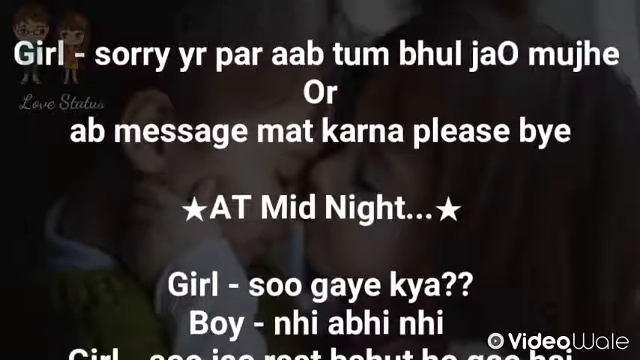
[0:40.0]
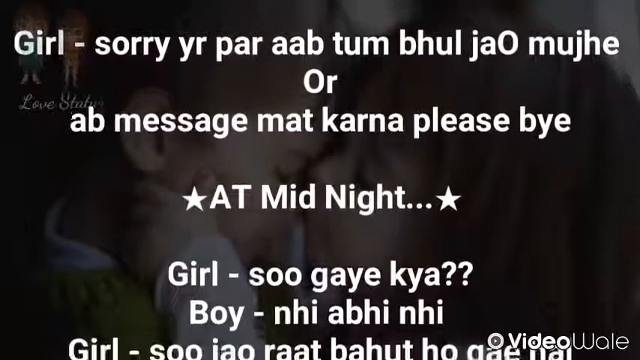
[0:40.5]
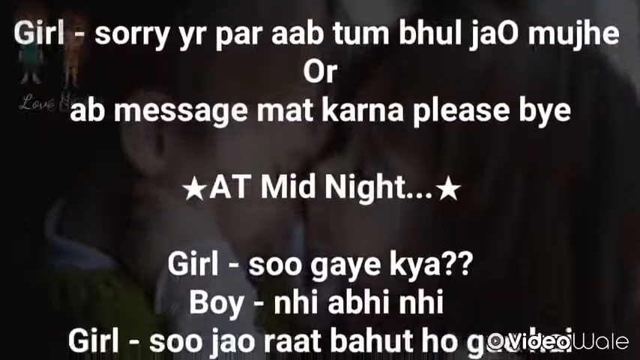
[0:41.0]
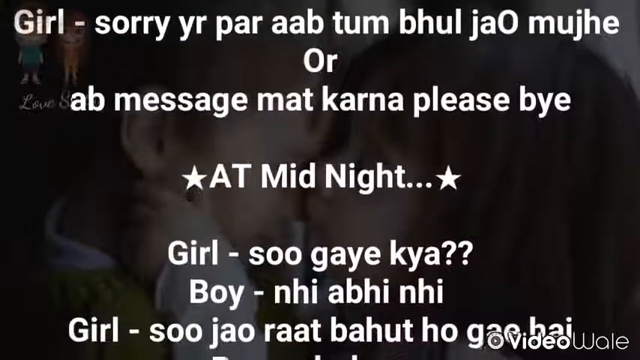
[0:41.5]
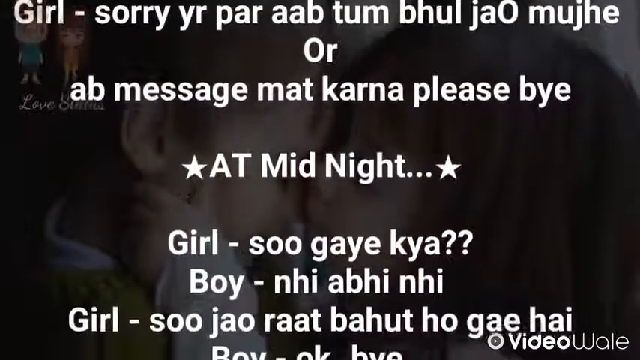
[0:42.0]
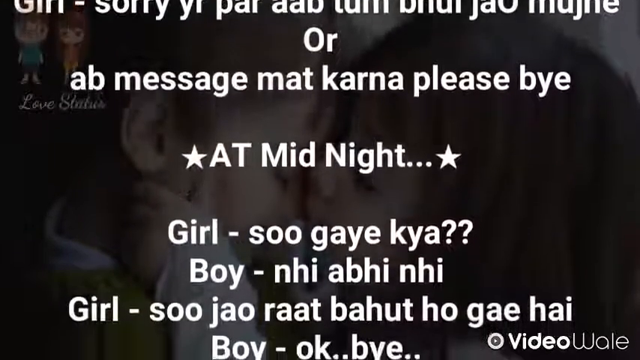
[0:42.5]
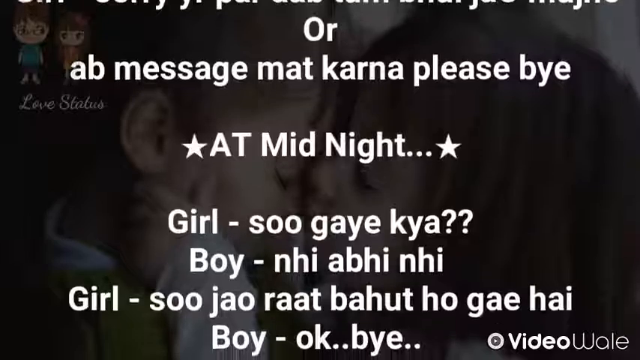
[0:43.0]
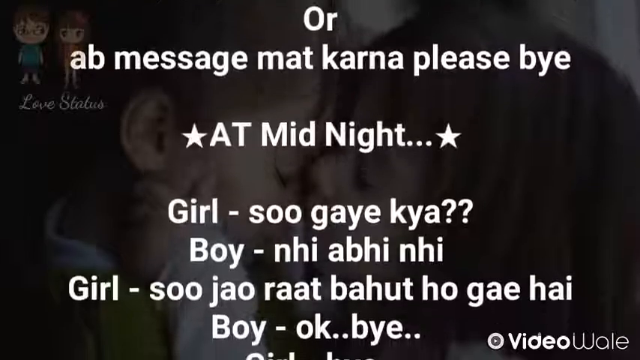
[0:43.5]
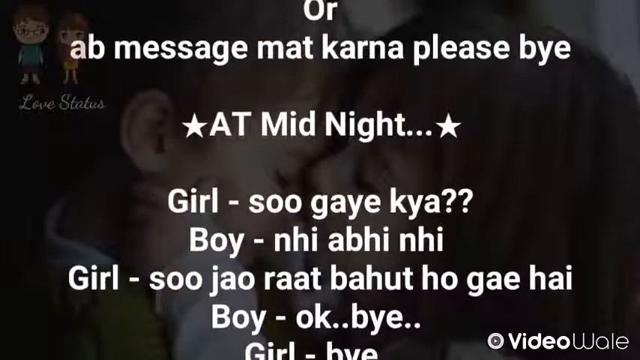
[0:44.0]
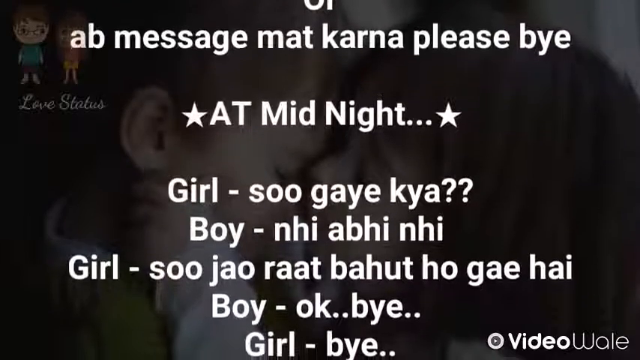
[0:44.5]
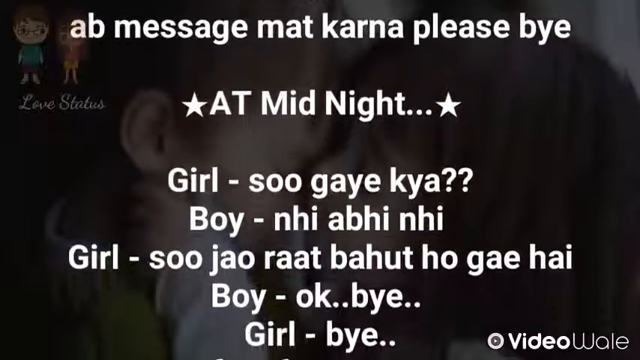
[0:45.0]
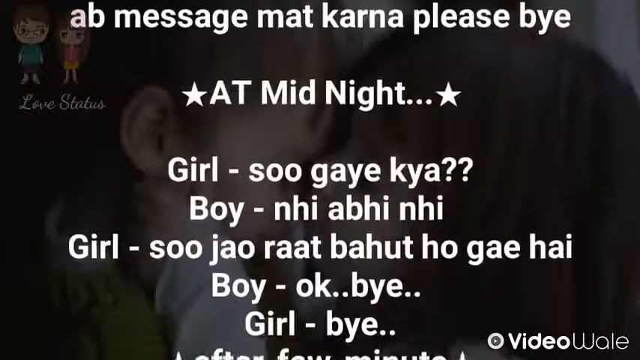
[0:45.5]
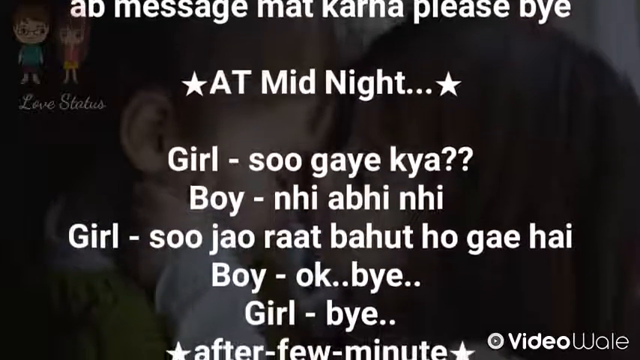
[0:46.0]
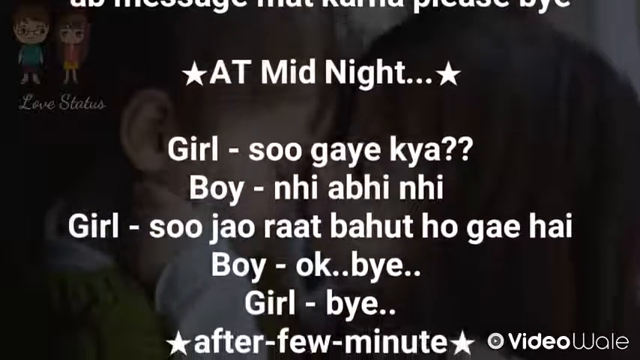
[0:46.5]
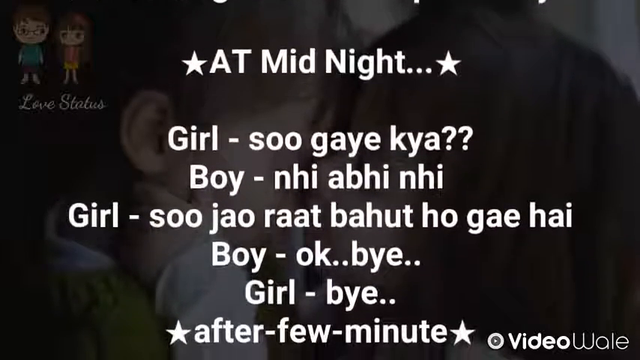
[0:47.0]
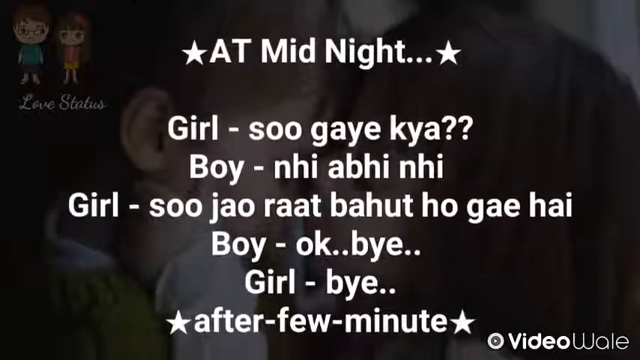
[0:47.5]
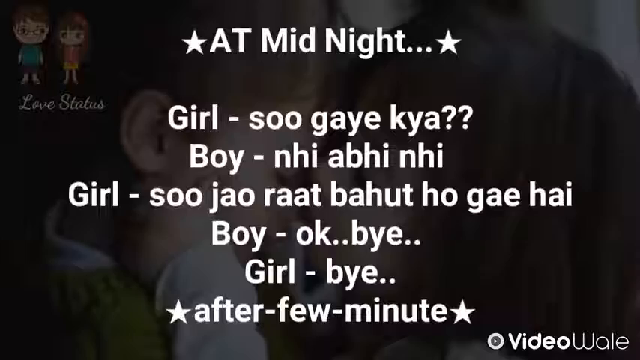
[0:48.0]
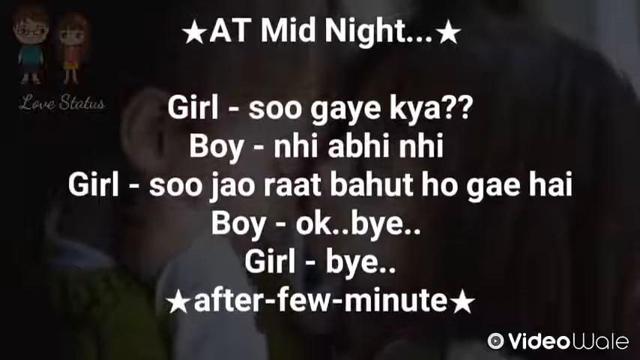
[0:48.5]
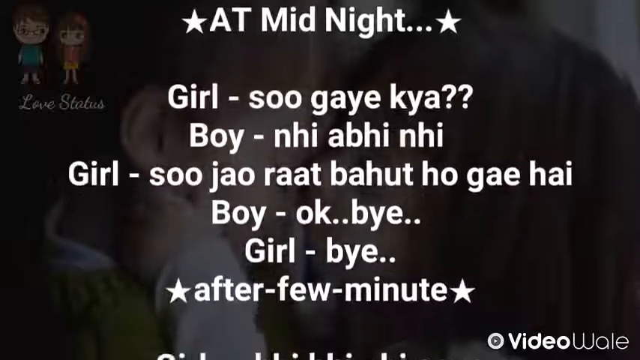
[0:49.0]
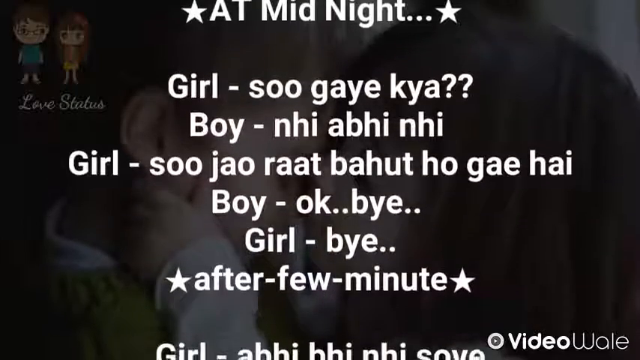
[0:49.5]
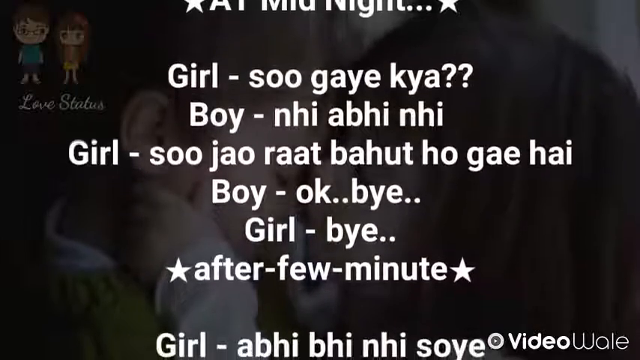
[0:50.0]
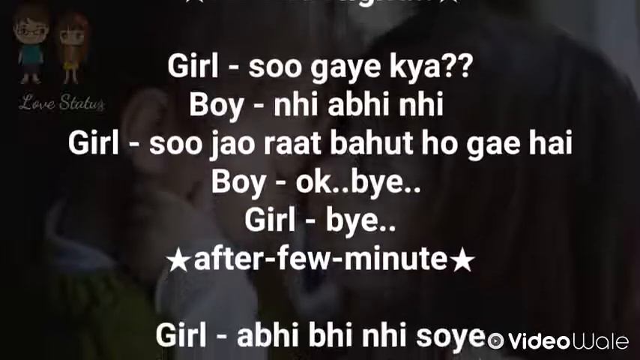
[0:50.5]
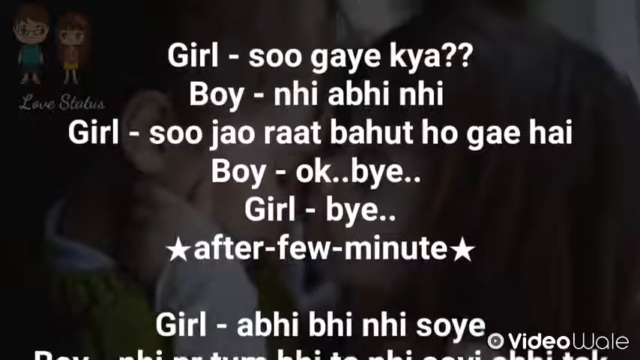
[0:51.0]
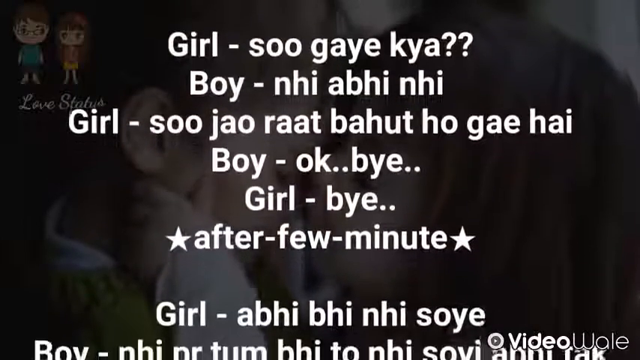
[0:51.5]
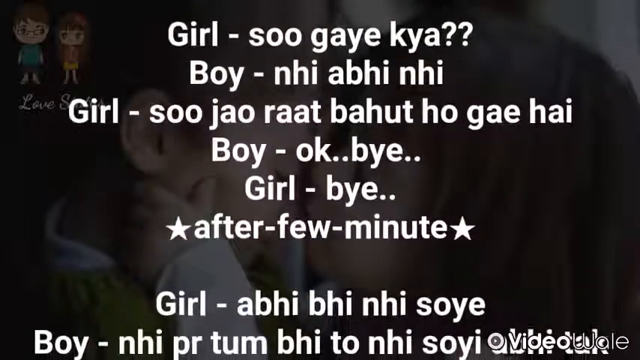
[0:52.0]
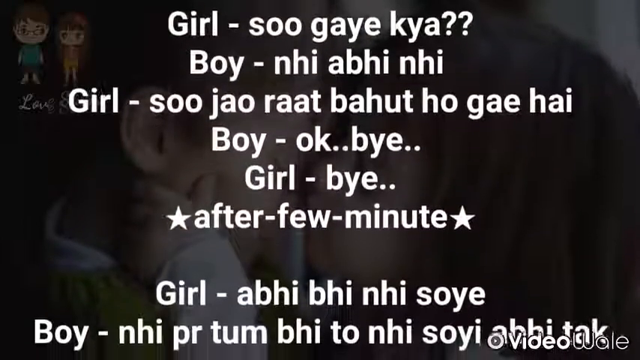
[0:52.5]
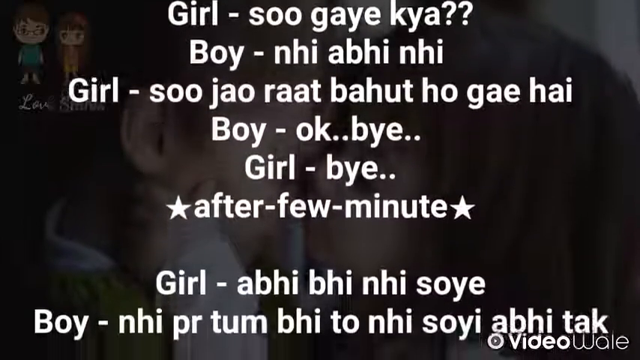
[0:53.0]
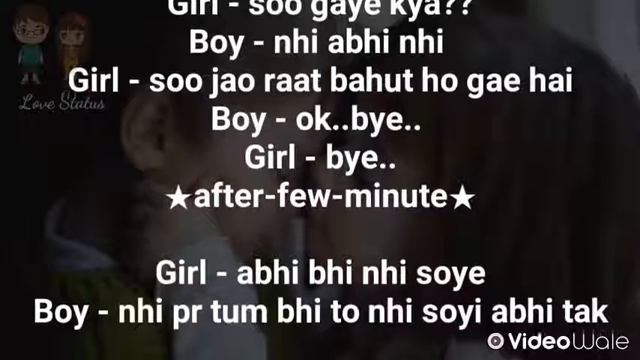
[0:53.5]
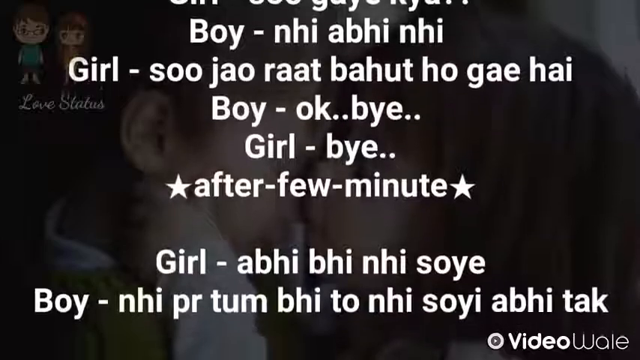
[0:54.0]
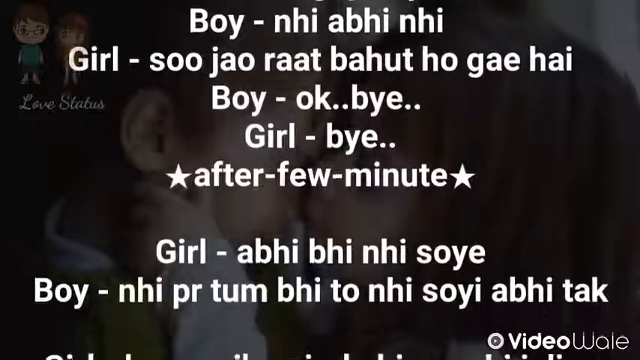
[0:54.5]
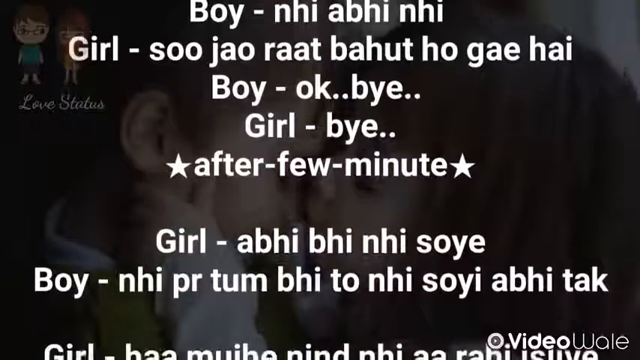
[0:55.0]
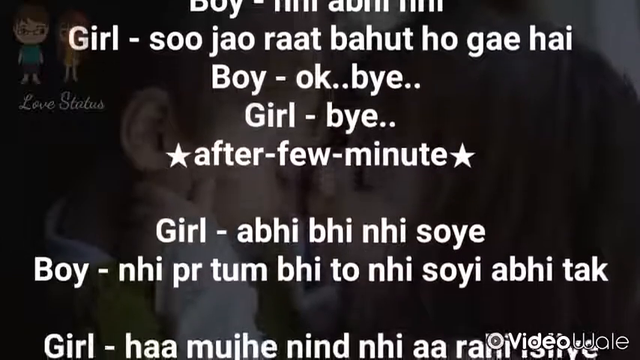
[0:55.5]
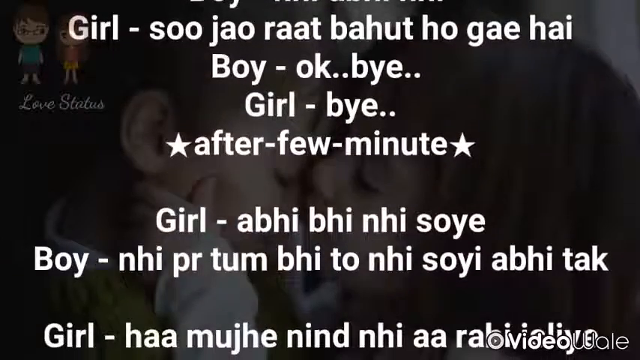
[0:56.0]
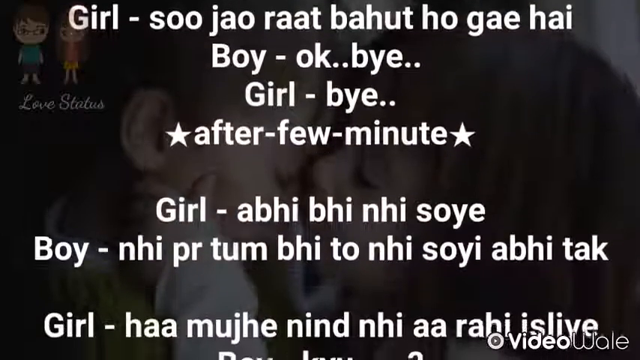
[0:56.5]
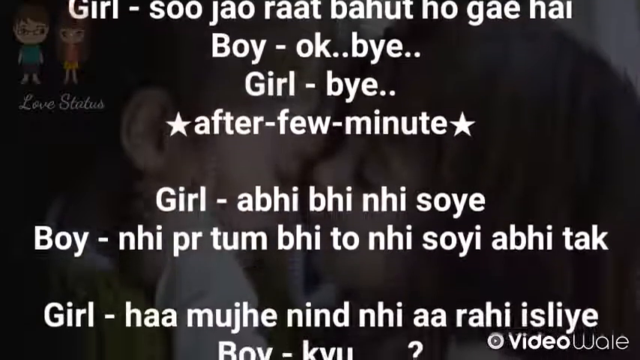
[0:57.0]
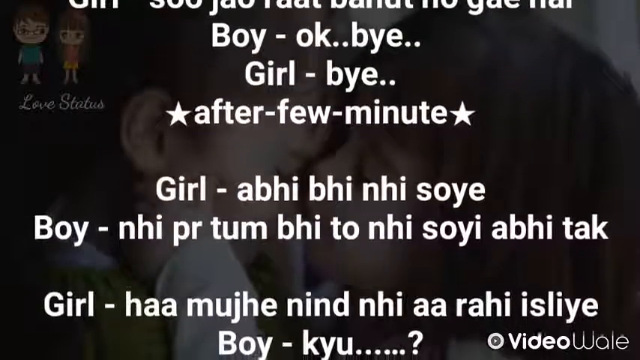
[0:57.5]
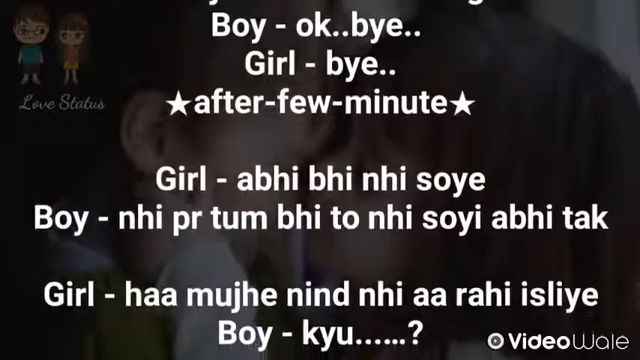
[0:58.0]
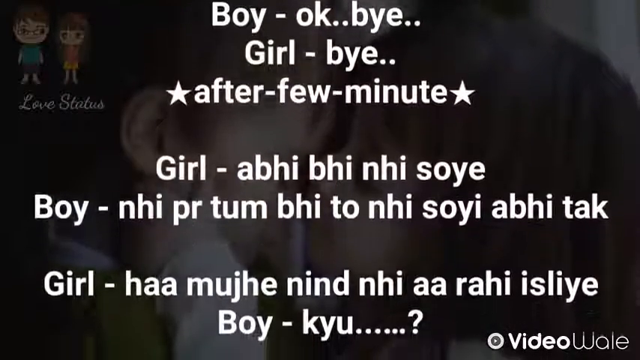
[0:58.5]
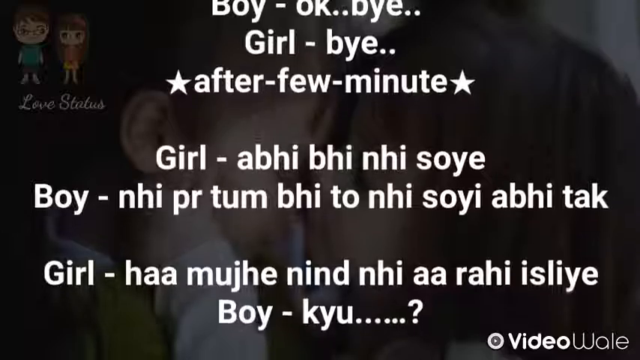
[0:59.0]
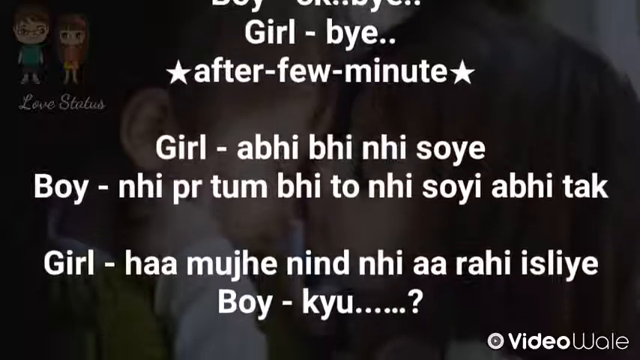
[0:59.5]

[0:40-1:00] The same static background image shows a young boy and a young girl. The boy, on the left, has his face laying down, and only the right side of his face is visible; he has white skin and short brown hair. The girl, on the right, shows only the left side of her face; she has dark brownish-black hair, and her left hand is on the left side of the boy's face. In the top left is a cartoon drawing of the boy and the girl, with the boy also on the left. The drawn boy wears glasses, a bluish shirt and dark blue shorts; the drawn girl wears an orange shirt. Bold white text in a foreign language appears in the middle of the screen and slowly rises toward the top. The text includes "girl" and "boy", indicating the girl and the boy are talking to each other in some kind of story.